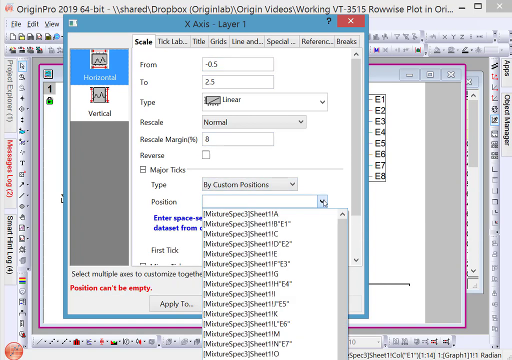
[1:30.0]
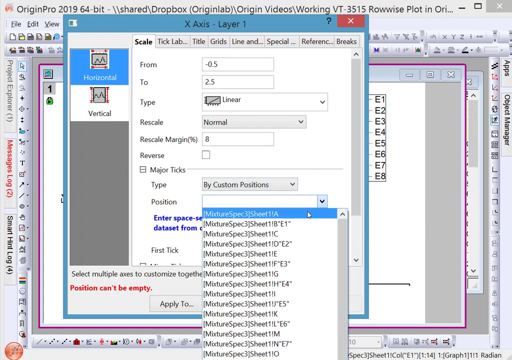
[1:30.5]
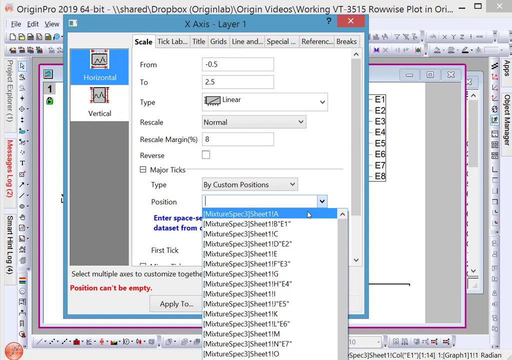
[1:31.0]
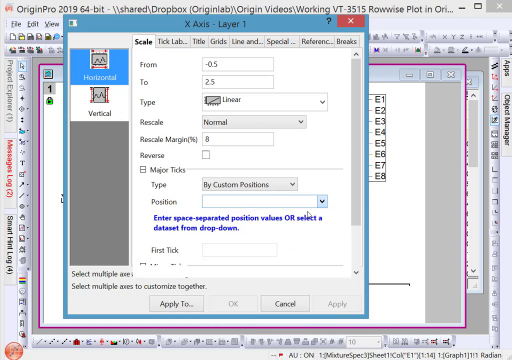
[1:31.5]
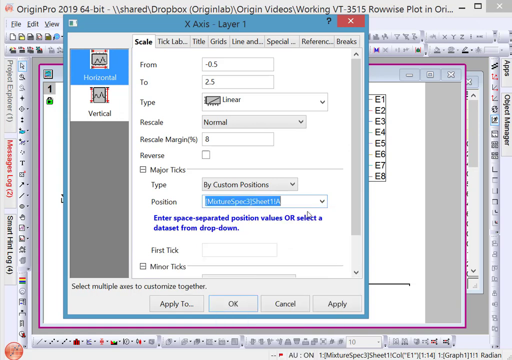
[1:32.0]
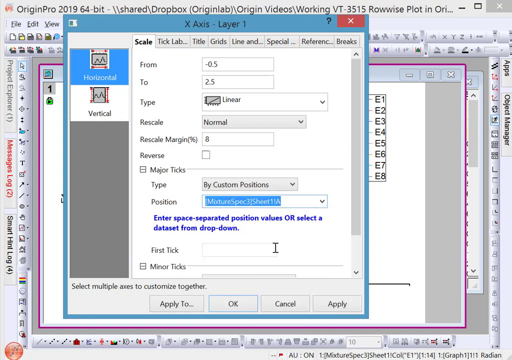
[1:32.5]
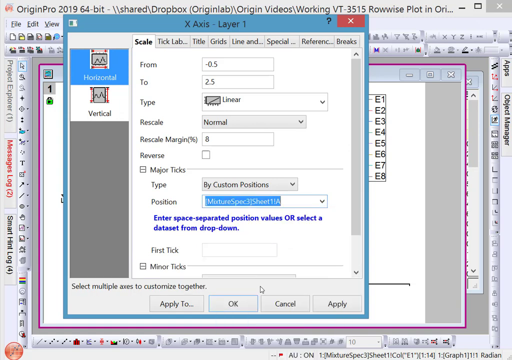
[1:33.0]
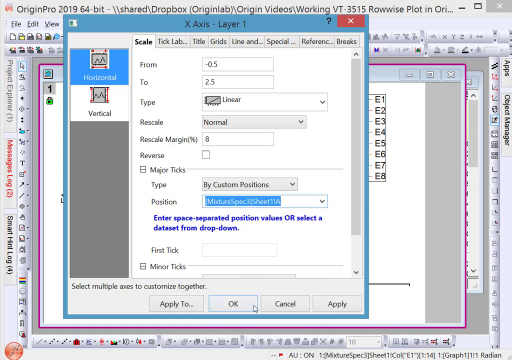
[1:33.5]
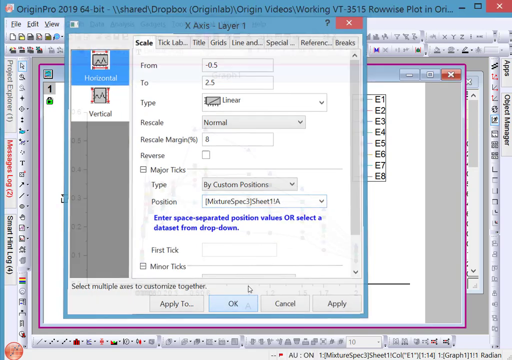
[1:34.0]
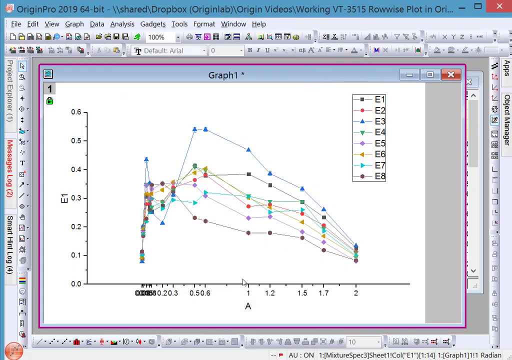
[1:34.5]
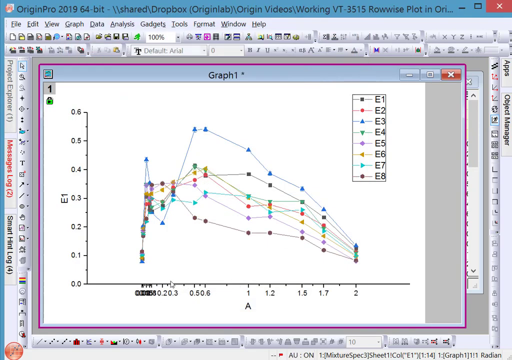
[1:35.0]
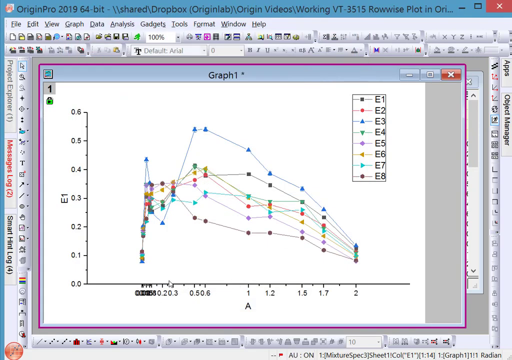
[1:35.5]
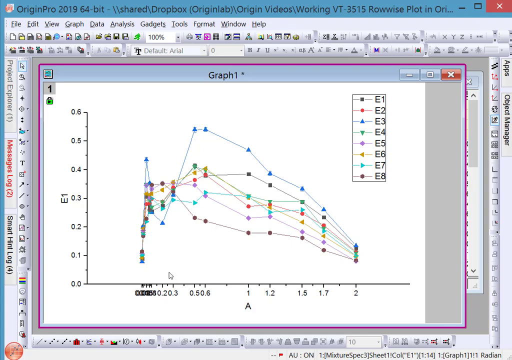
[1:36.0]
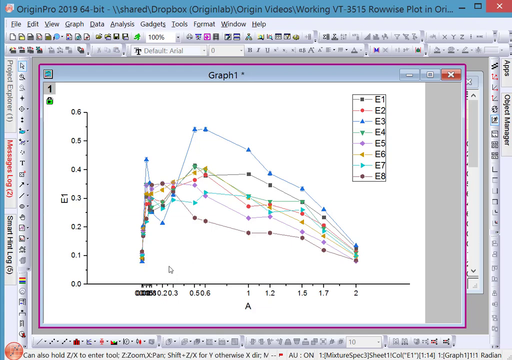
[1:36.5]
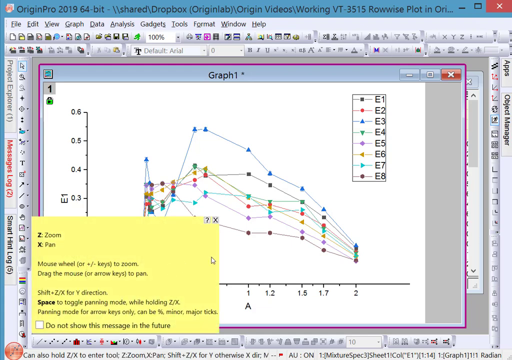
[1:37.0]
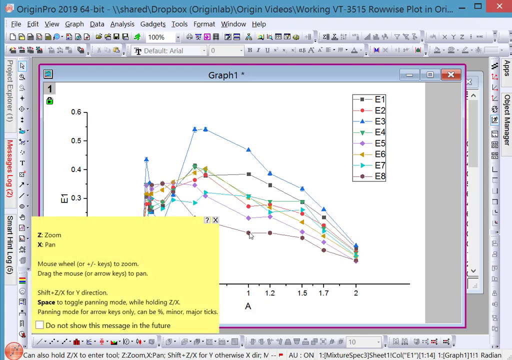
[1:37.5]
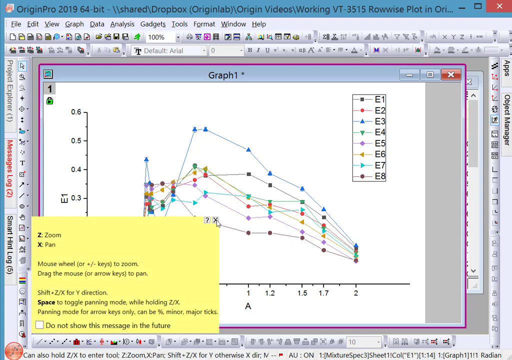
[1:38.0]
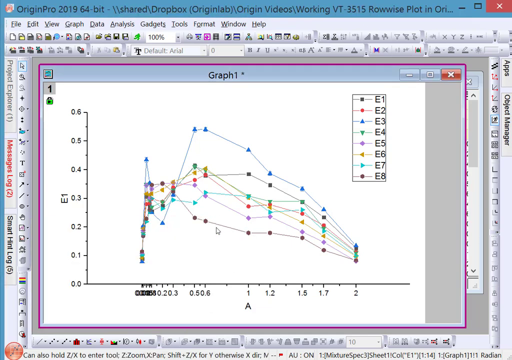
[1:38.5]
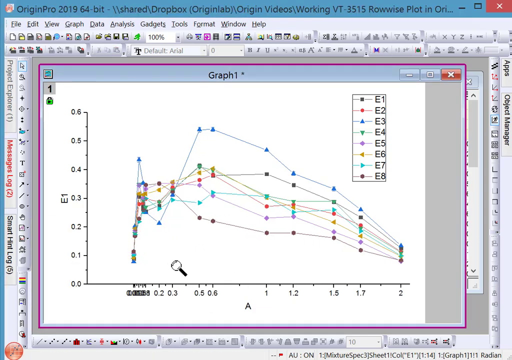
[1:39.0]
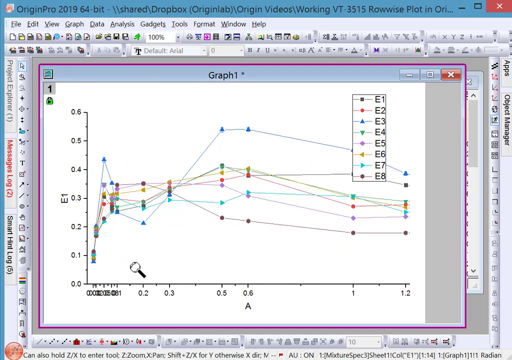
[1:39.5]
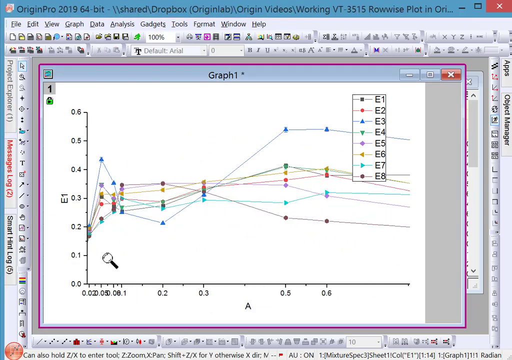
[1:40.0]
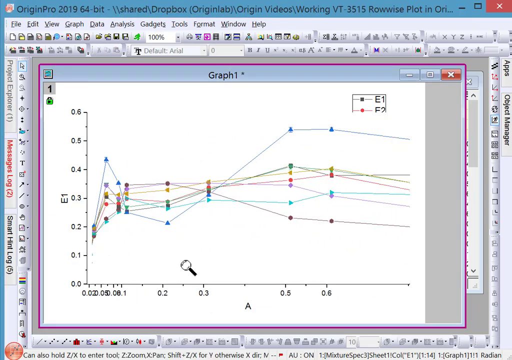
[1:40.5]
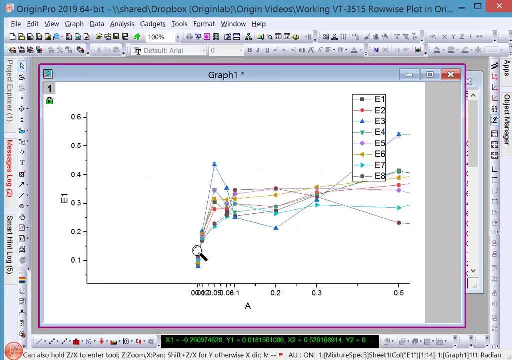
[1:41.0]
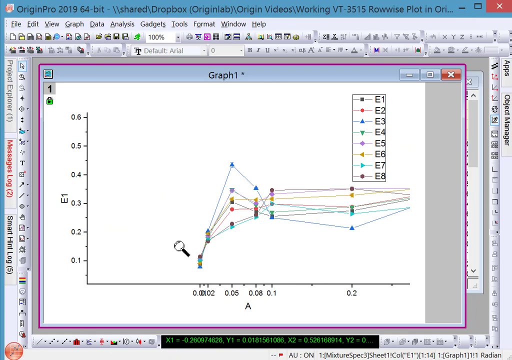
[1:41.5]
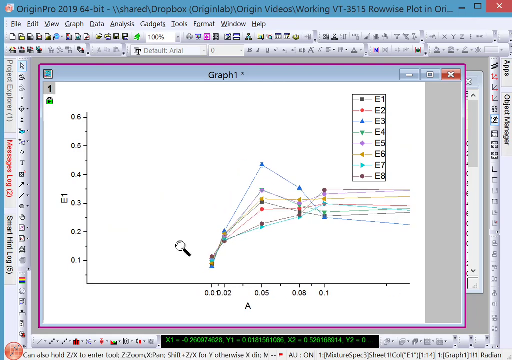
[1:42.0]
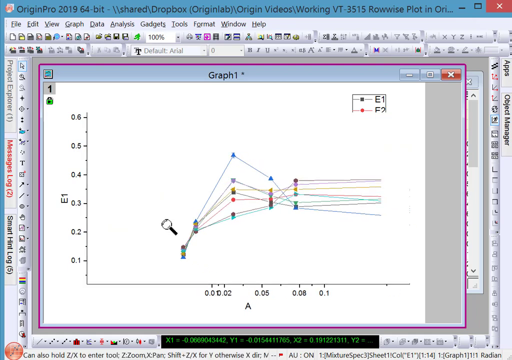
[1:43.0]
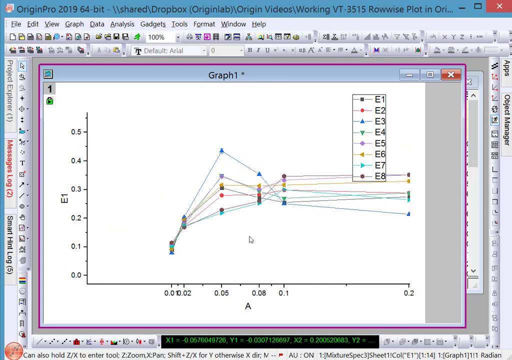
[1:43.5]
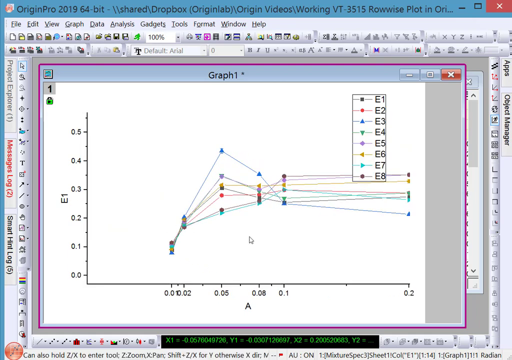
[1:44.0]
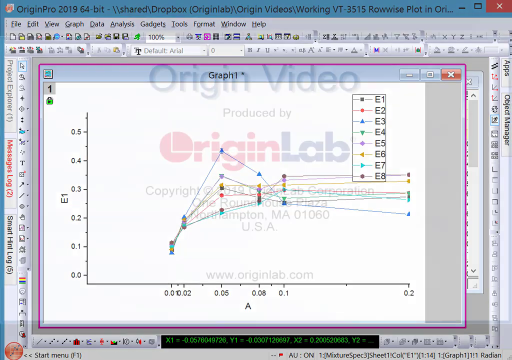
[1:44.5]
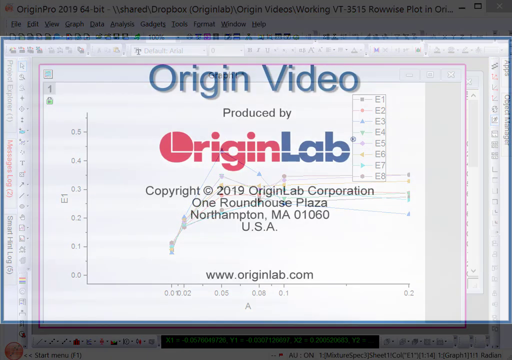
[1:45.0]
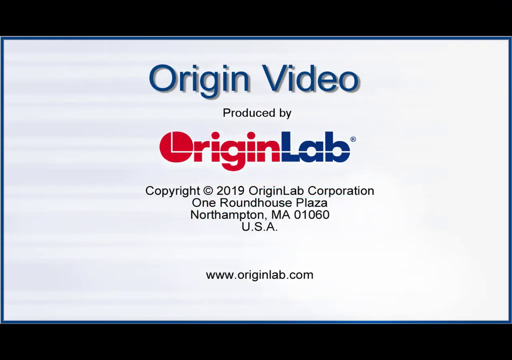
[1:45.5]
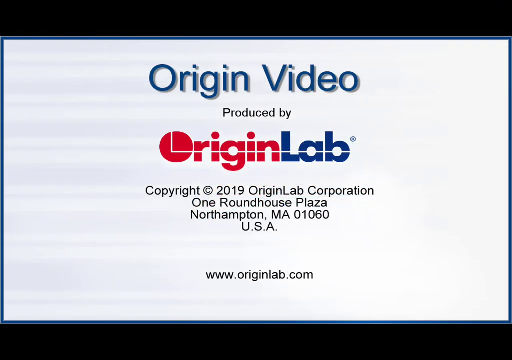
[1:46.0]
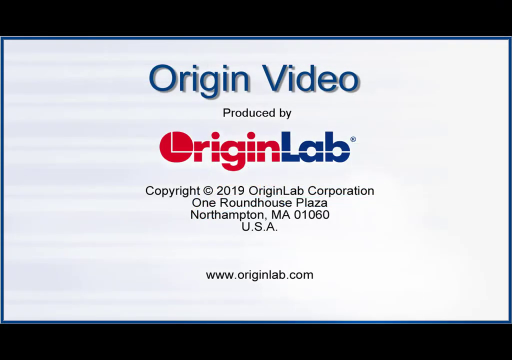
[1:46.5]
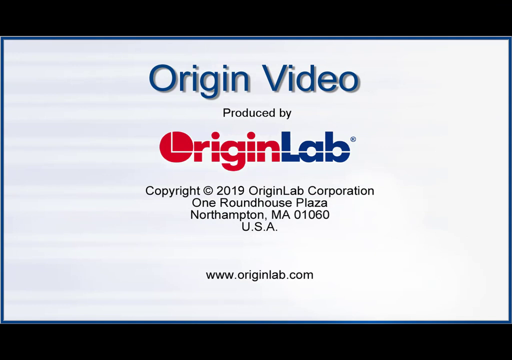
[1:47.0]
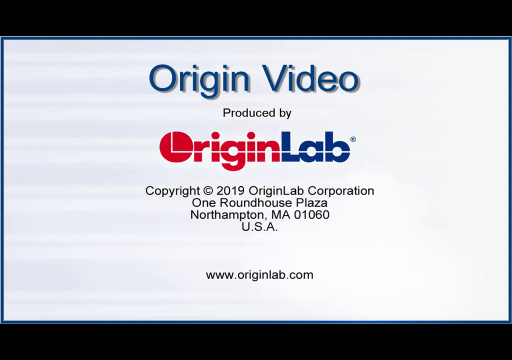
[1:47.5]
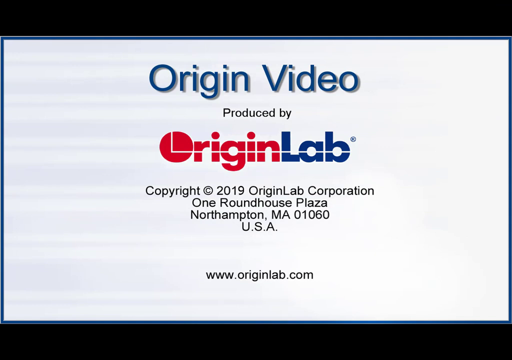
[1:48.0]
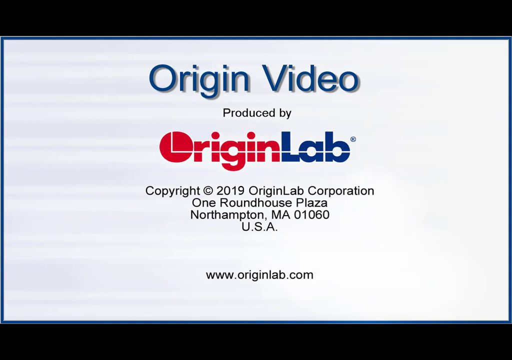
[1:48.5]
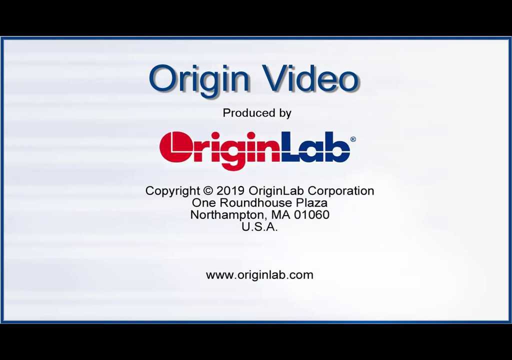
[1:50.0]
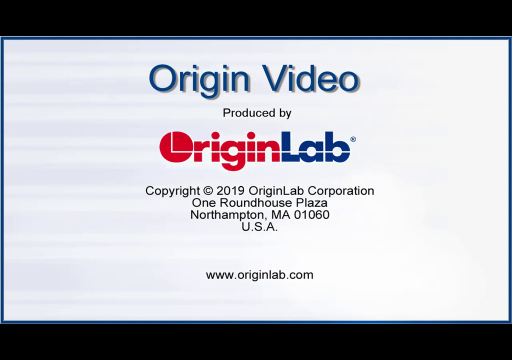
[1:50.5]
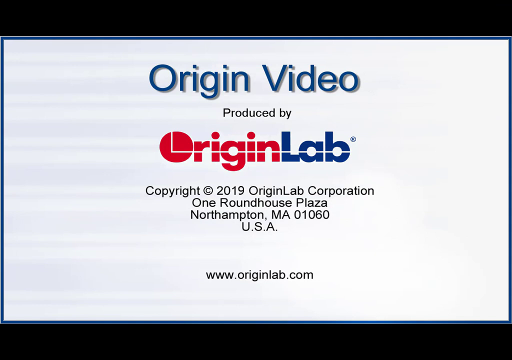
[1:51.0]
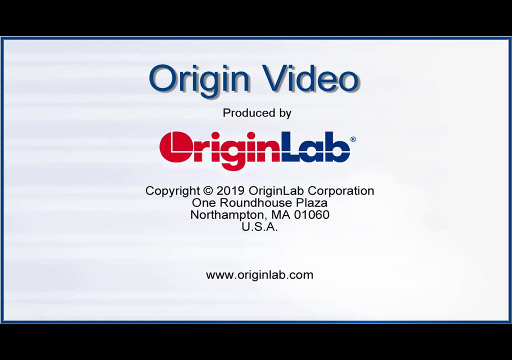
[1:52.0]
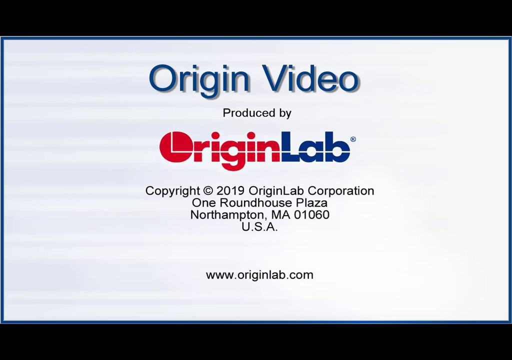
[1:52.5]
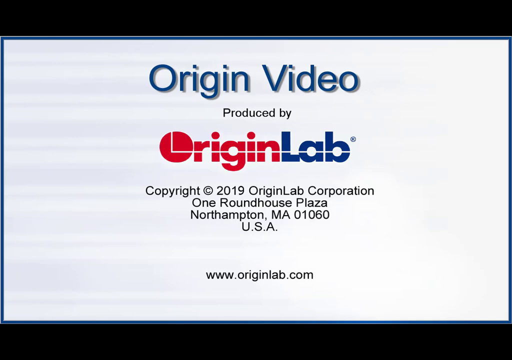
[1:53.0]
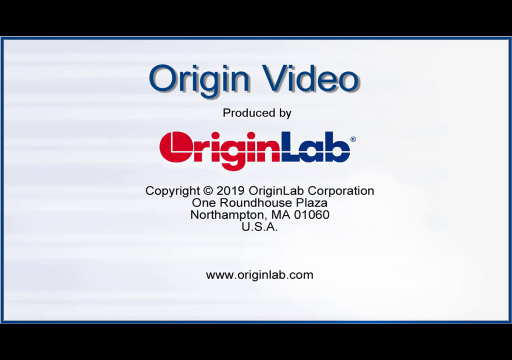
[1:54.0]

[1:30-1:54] A pop-up window in the Origin Pro software is open to 'x-axis layer 1' within the 'scale' tab. A drop-down menu is open under 'major ticks' and then 'position'. The cursor moves down and selects 'Mixture Spec 3 Sheet 1 A'. Text below it in dark blue reads, "Do you enter space-separated position values or select a dataset from the dropdown." The cursor moves to the bottom of the popup and clicks OK. The window closes to reveal a graph behind it titled 'Graph 1' with colourful lines and plot points labelled E1 through E8. The x-axis now shows several numbers layered on top of each other on the left side, which are unreadable. A pop-up in a yellow box appears in the bottom left of the screen with a tip about using the Z key to zoom and the X key to pan, using the mouse wheel to zoom or dragging the mouse or arrow keys to pan, using shift with Z or X for the Y direction, and using space to toggle panning mode while holding Z or X. A checkbox at the bottom says, 'Do not show the message in the future.' The pop-up is closed, the cursor changes, and the graph is gradually zoomed out. The plot points then move to the right and back to the left. The window then disappears entirely, showing an end screen stating that the video was produced by Origin Lab, with an address for the Origin Lab business and a website.